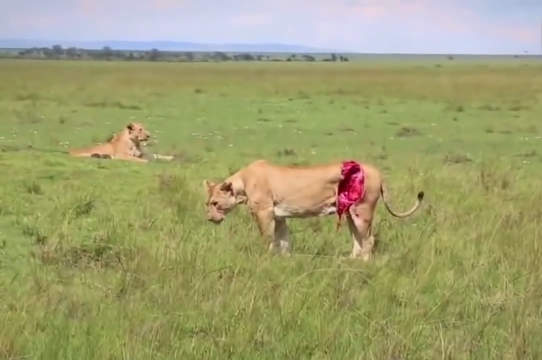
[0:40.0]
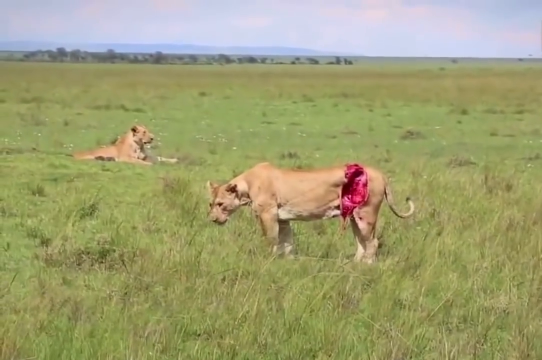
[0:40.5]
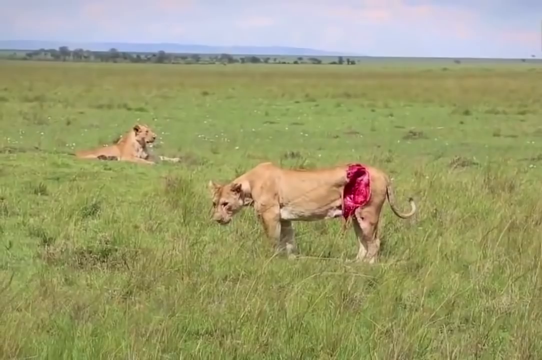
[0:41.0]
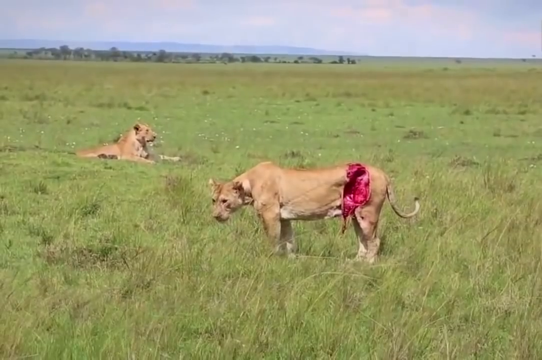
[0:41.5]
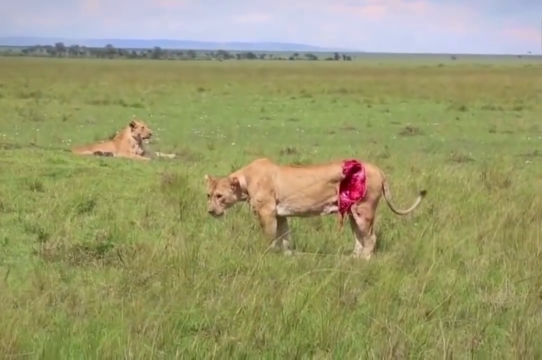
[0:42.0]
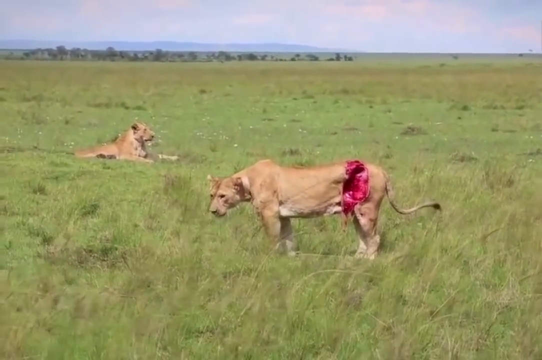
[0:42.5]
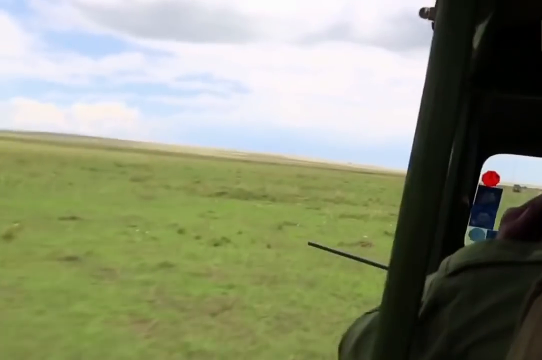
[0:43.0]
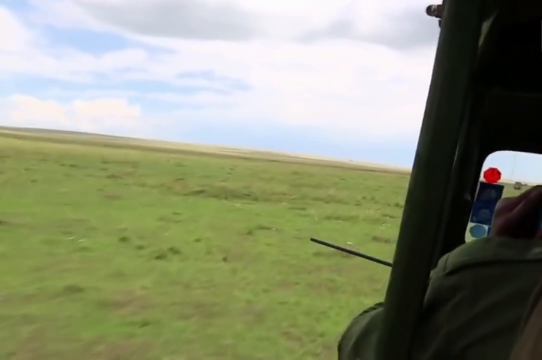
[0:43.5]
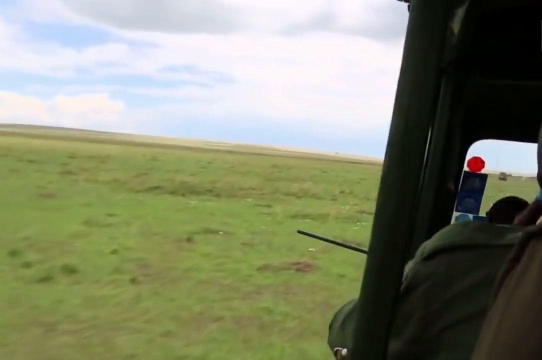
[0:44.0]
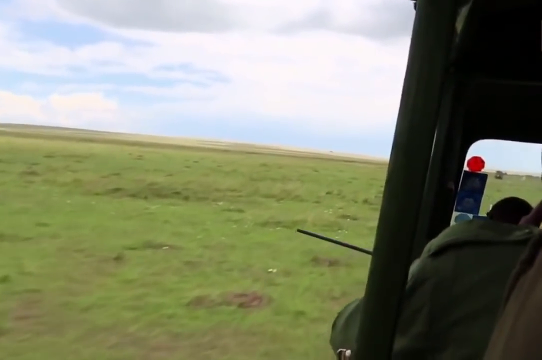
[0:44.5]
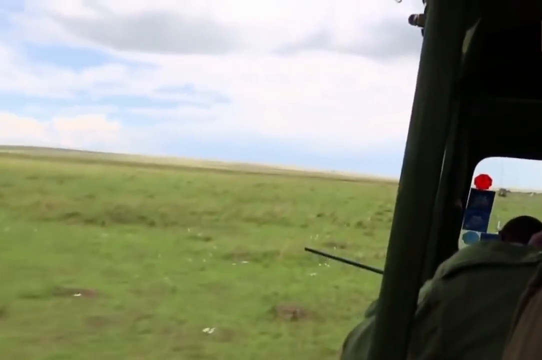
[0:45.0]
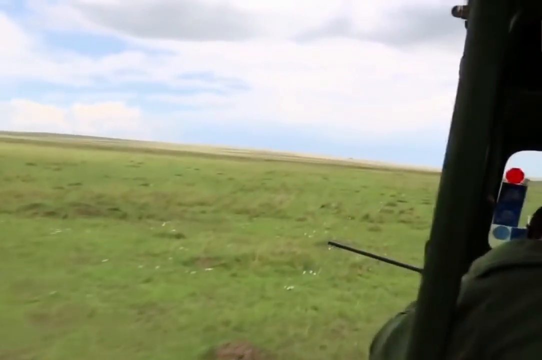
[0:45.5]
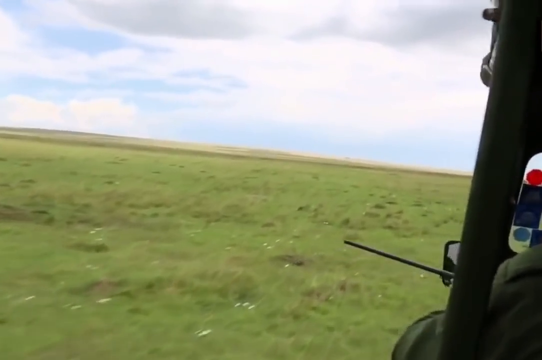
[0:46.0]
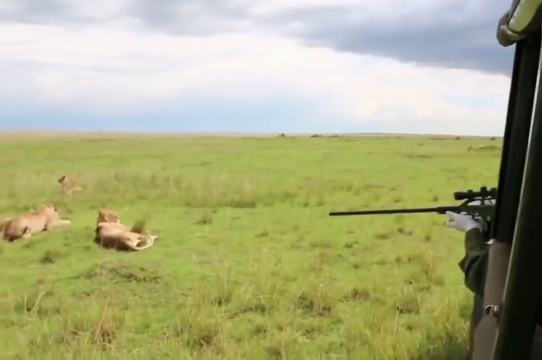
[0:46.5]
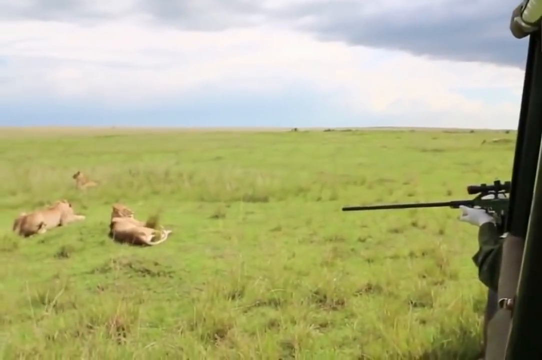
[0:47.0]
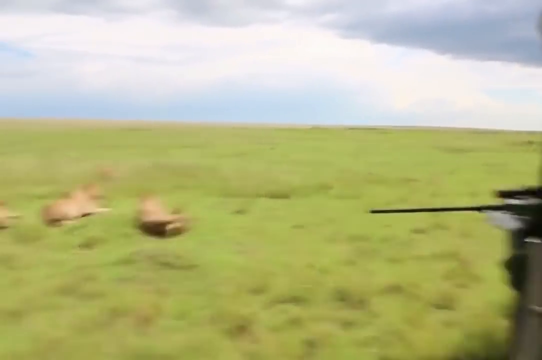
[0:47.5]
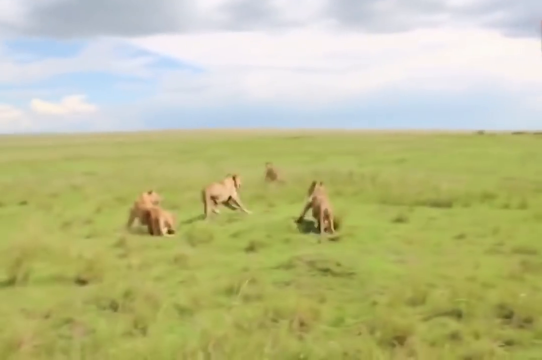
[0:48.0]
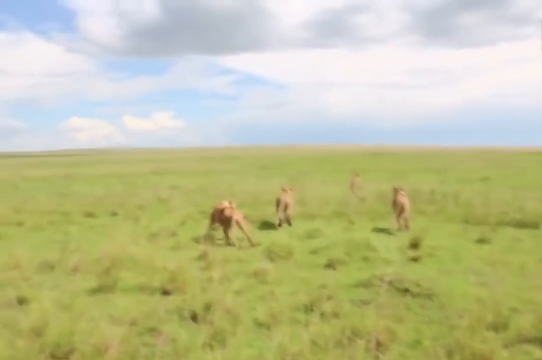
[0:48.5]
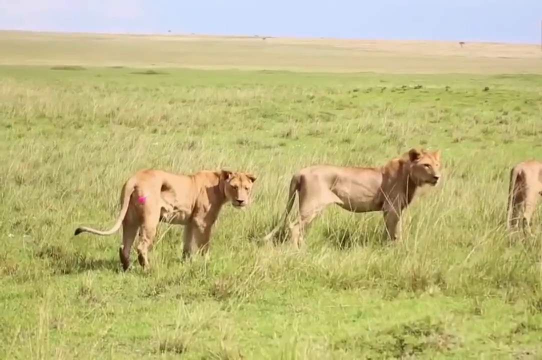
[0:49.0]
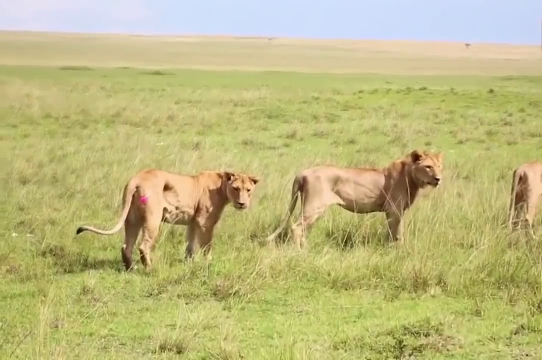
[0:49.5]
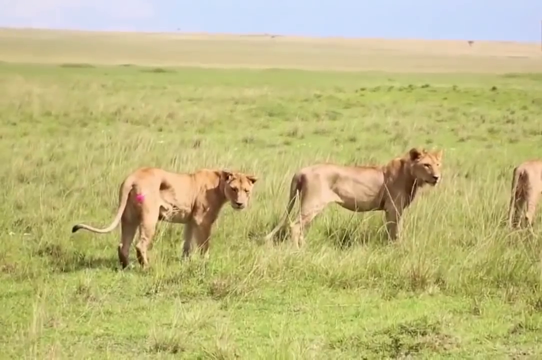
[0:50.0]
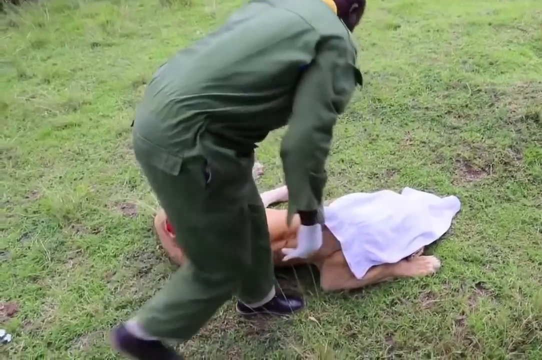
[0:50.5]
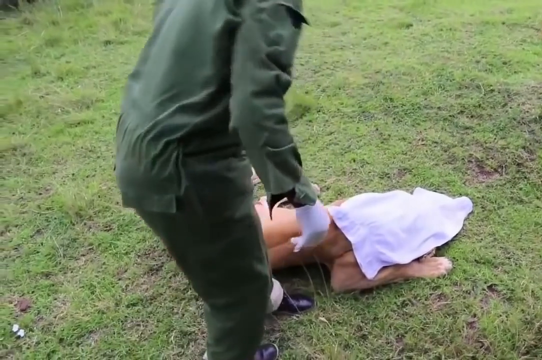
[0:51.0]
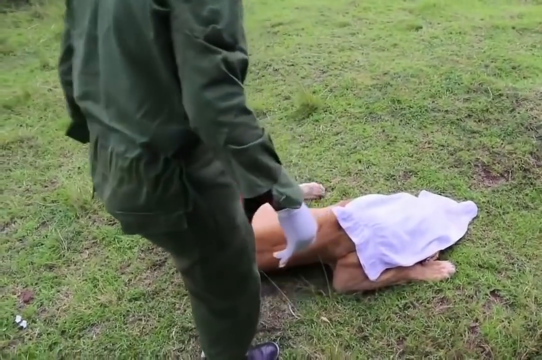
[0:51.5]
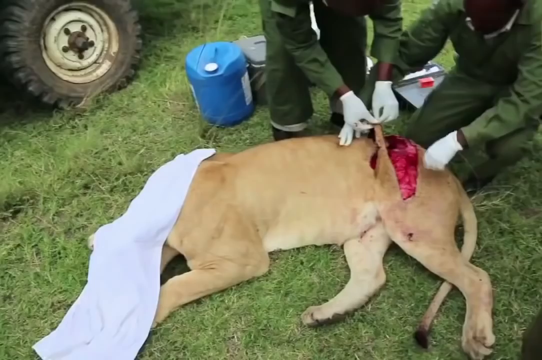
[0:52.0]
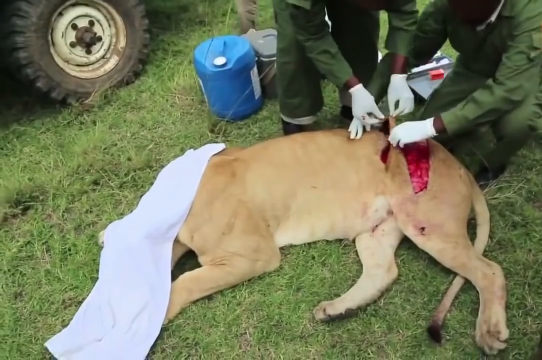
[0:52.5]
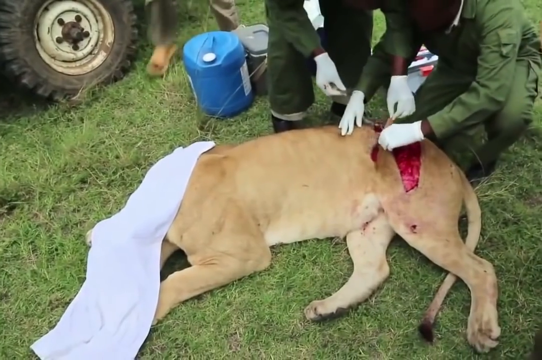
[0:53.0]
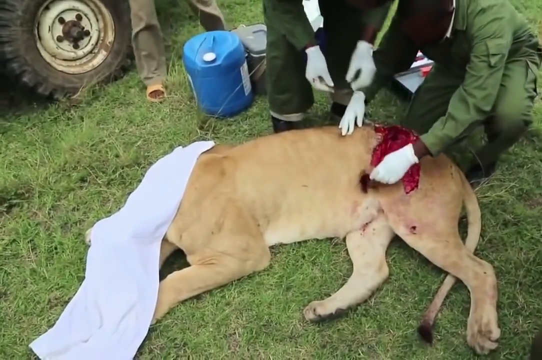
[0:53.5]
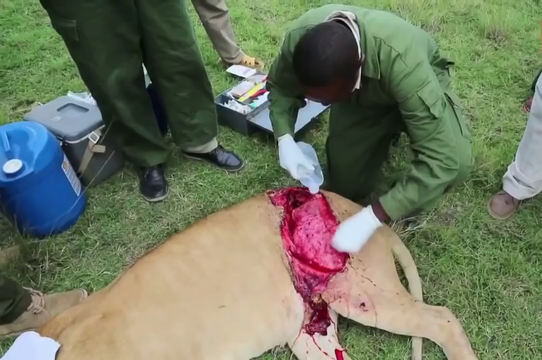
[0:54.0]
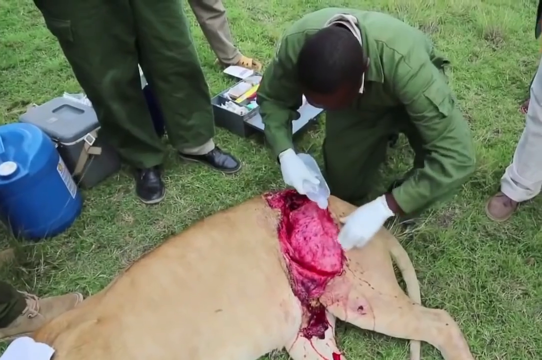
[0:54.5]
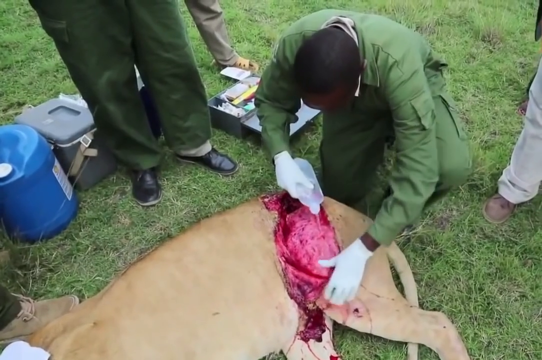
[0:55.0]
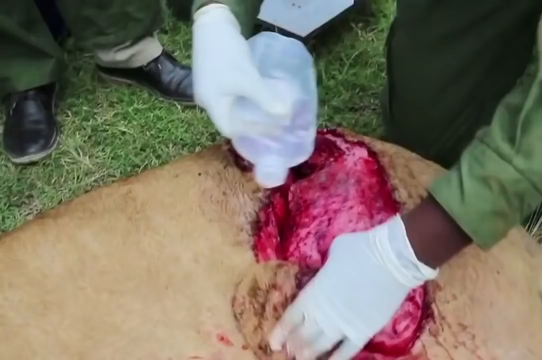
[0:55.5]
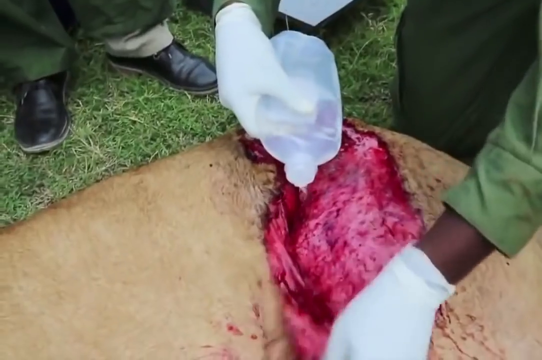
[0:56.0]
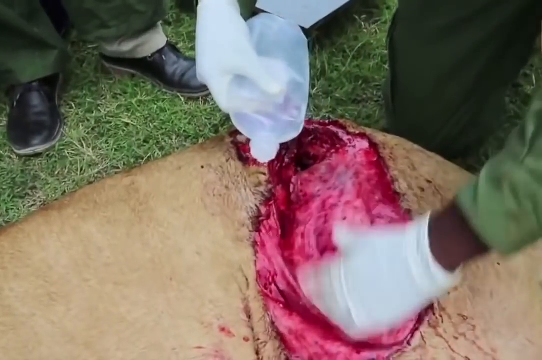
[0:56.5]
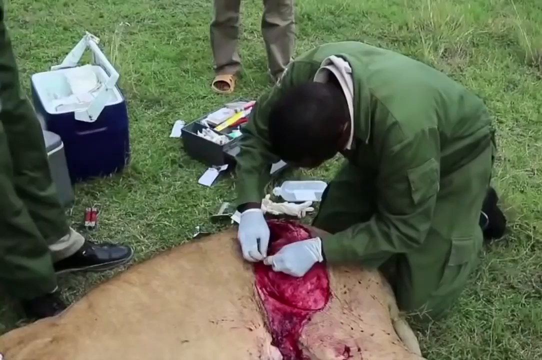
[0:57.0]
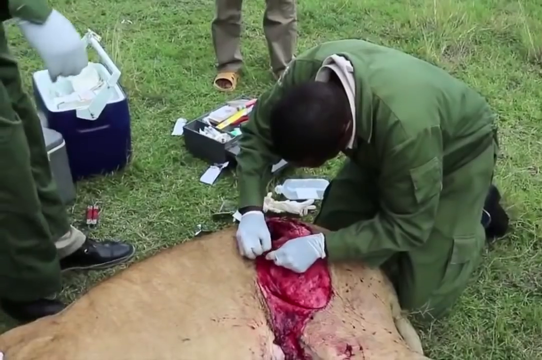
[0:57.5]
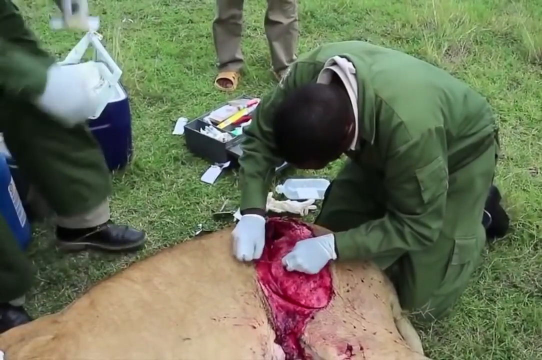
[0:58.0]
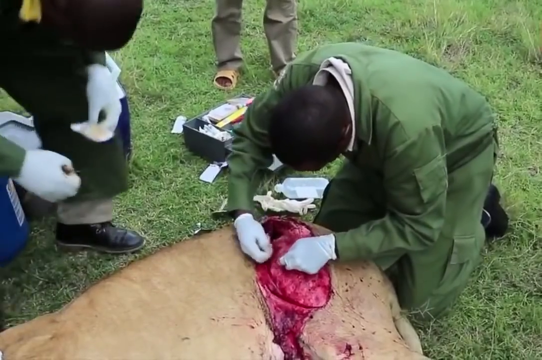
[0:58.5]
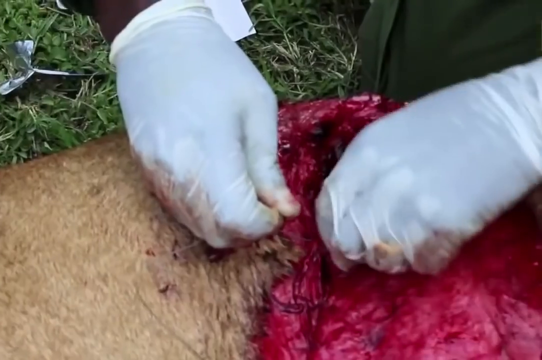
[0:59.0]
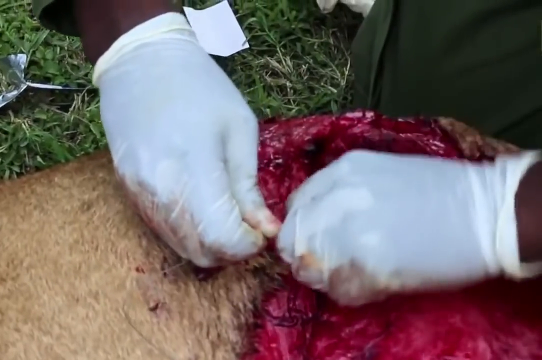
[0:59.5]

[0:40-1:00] A car moves around the area. The people use a gun to shoot and inject something into the wounded lion so that it lies down, and after being shot the lion lies down. Officers in green uniforms then attend to the lion's wound: once it is down, they cover its head and begin operating on the wound wearing white gloves. One officer treats the wound while the others stand next to him. There is a blue jerrycan, and they have their boxes with them, one open and one closed. Some people wear black shoes and others wear different types of clothing; two are wearing green.